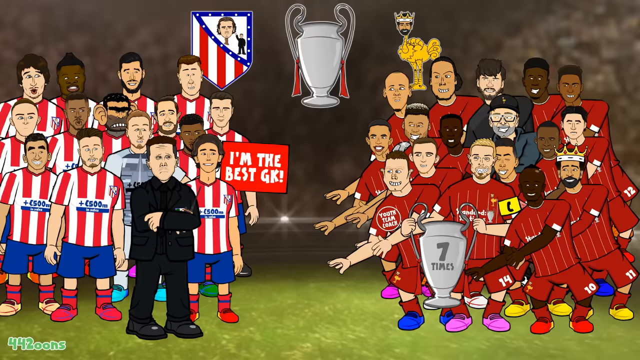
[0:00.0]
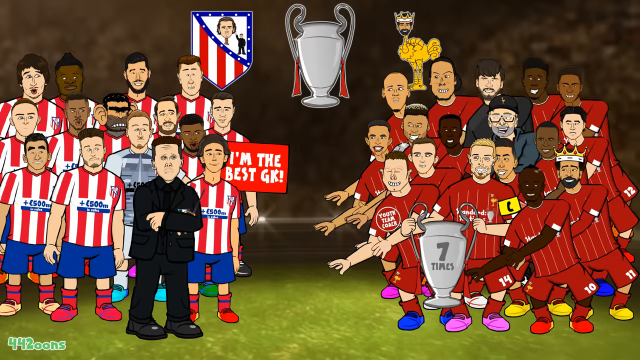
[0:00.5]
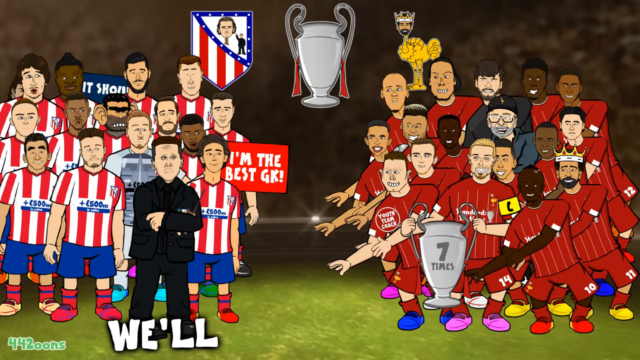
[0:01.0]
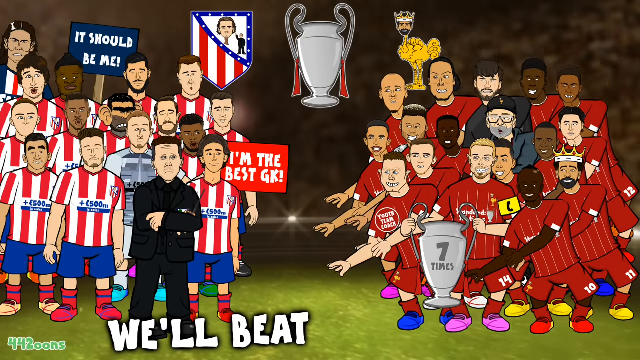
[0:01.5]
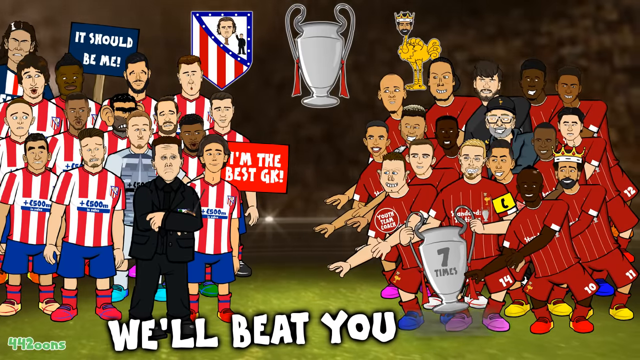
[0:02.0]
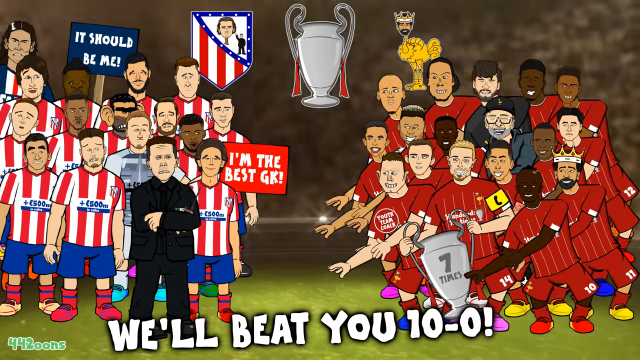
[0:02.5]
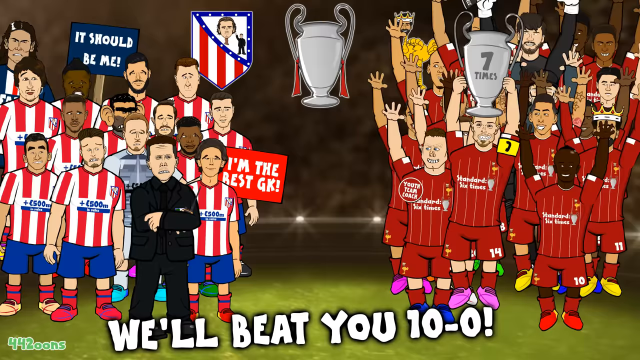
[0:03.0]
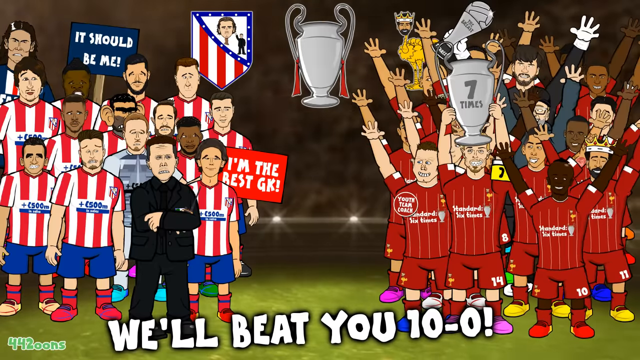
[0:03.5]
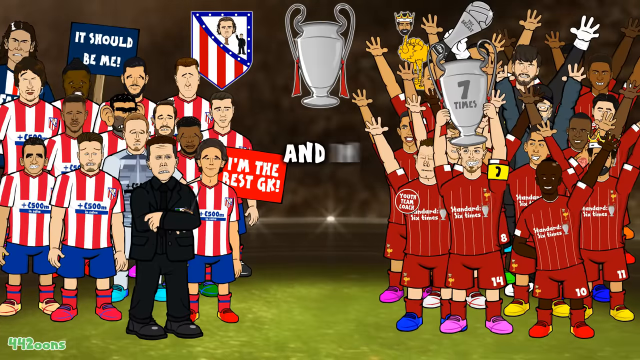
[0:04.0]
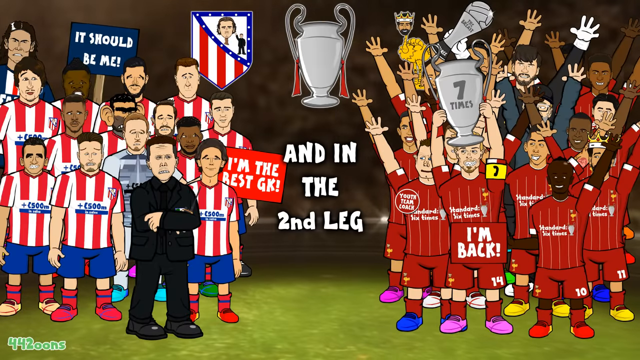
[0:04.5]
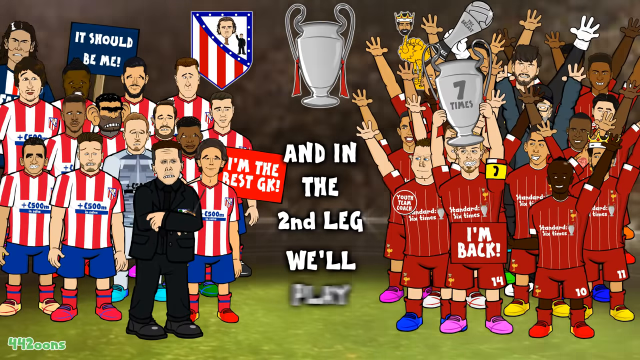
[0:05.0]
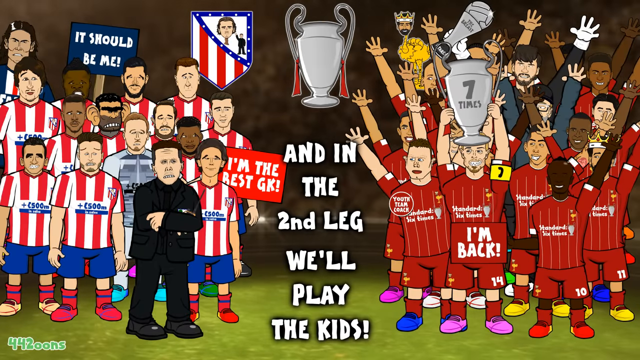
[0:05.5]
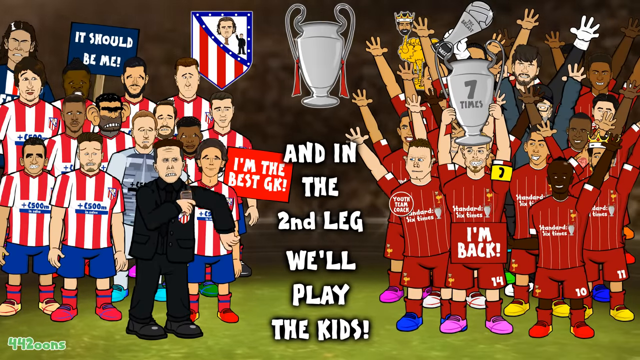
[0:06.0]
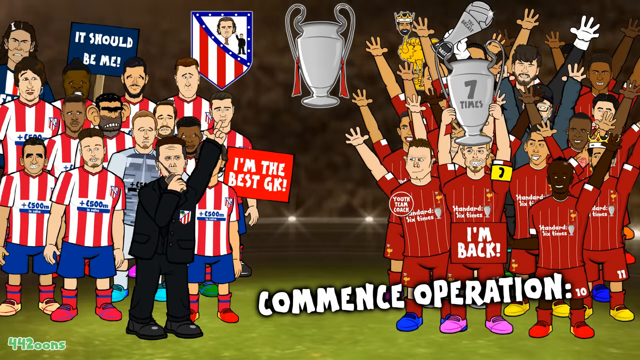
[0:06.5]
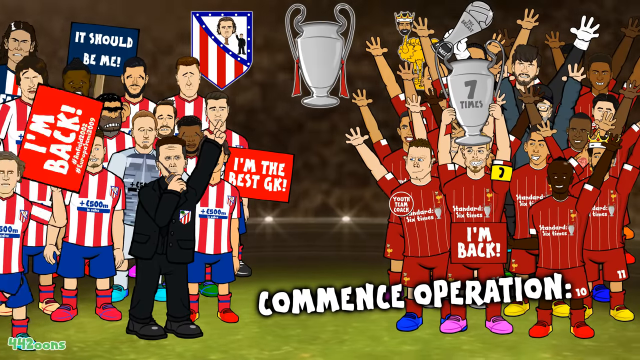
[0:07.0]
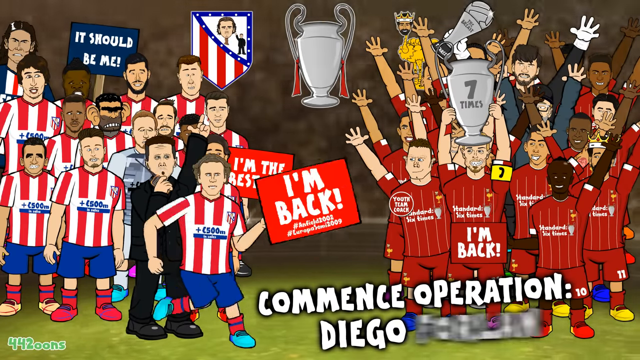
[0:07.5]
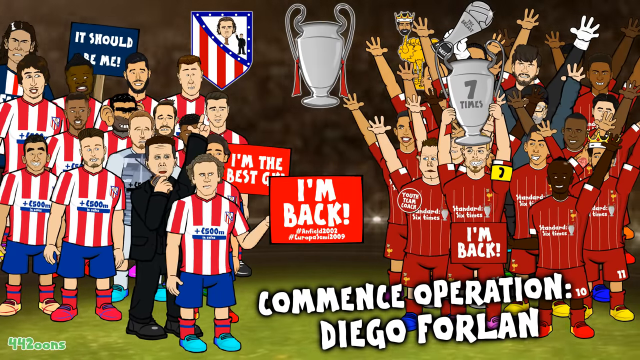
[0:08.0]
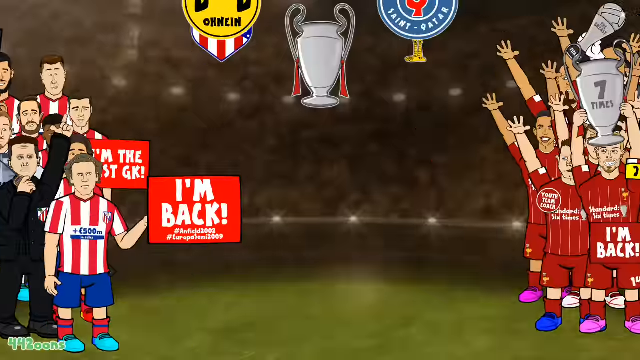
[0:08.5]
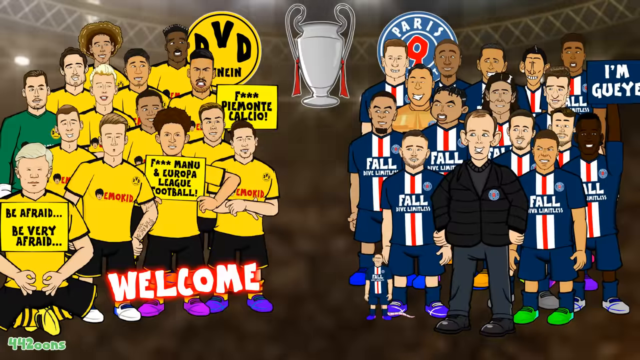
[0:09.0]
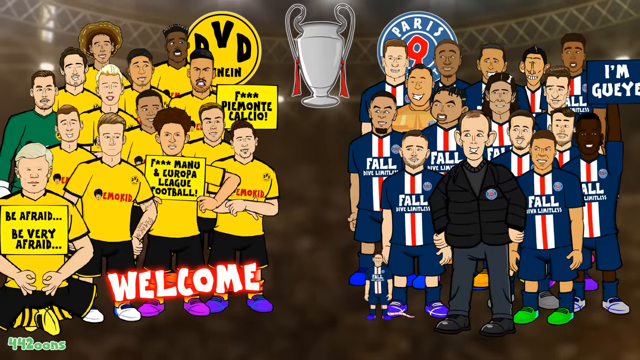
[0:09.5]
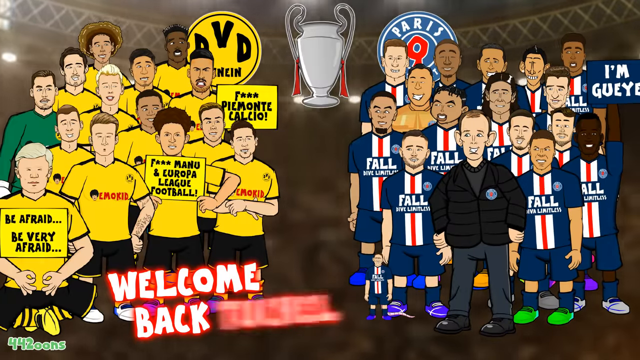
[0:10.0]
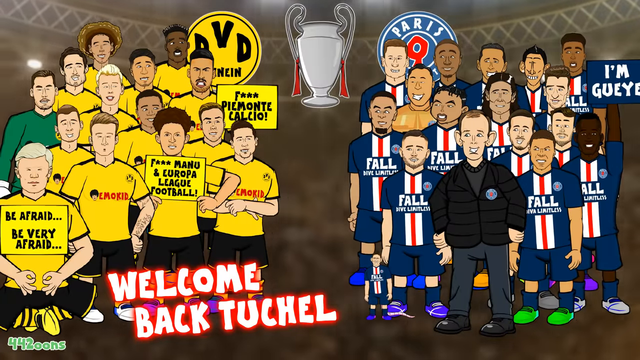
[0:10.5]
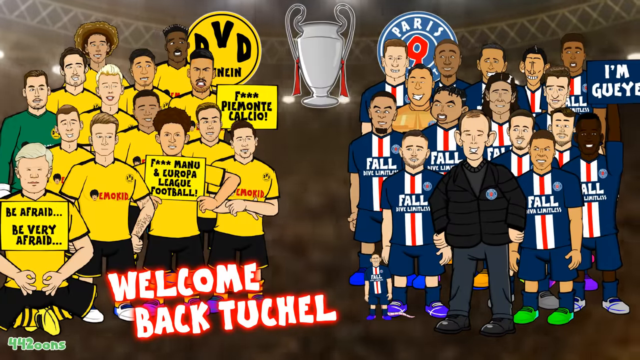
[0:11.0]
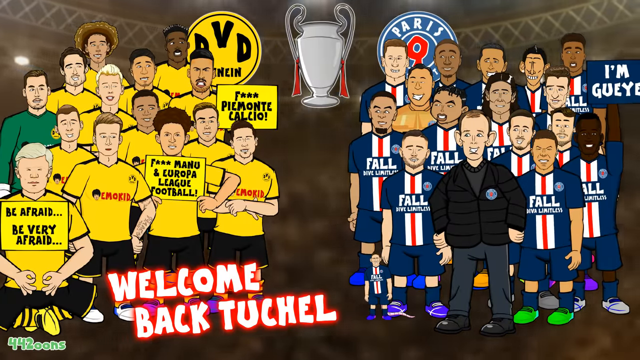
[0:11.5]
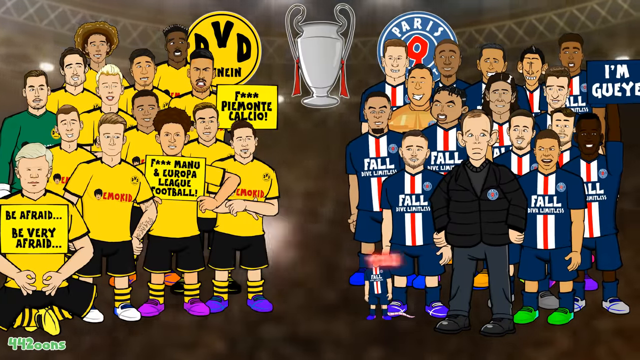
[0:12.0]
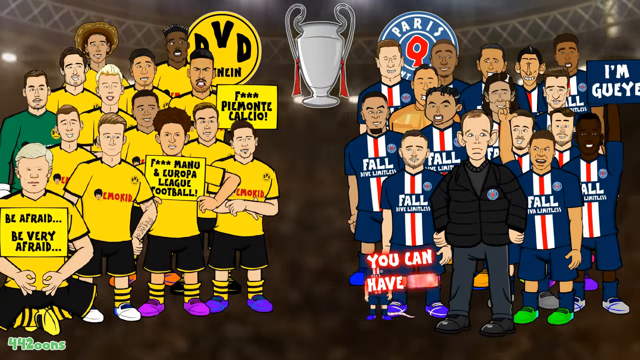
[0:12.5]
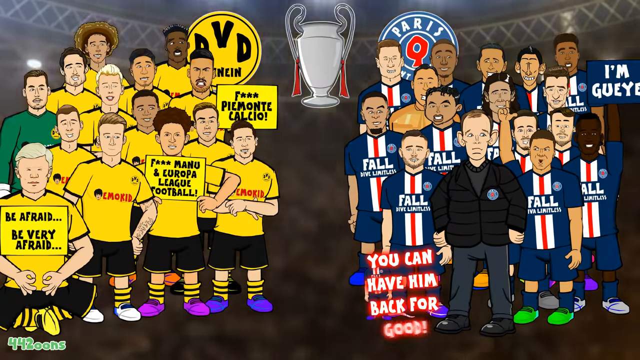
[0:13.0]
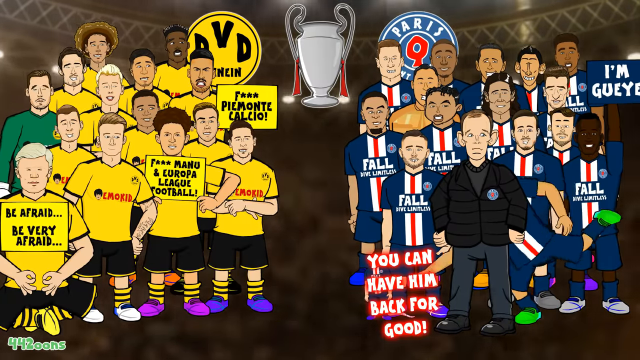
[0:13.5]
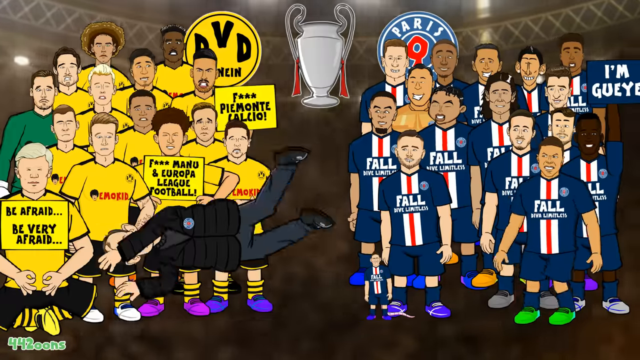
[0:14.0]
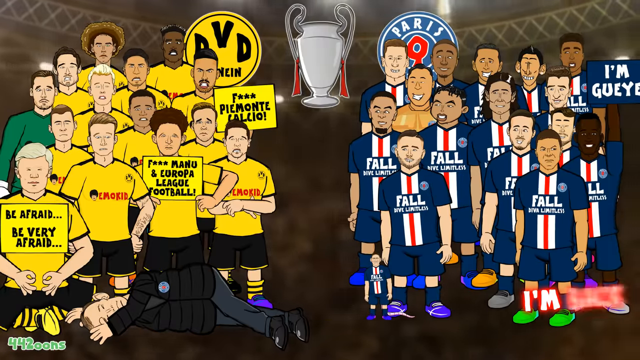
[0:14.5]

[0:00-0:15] The video, called The Last 16 Champions League Song, is an animation showing two teams: one in solid red uniforms on the right side of the screen and one in red and white striped uniforms on the left. The characters are kind of poorly animated, with little movement. White text appears in the middle of the screen reading "And in the second leg we'll play the kids!", followed by "commence operation". One guy runs onto the field holding a sign that says "I'm back. #Anfield 2002, #Europa Semi 2009". The team on the right in solid red jerseys has "standard" written in white on their jerseys. One guy holds up a gray trophy that says "seven times". The animation then moves to two different teams: a yellow kit on the left and a blue kit on the right with a white and a red line down the middle. The players on the left hold different signs; one says "be afraid, be very afraid" and another says "F Man U and Europa League Football". The characters have angry faces. Text appears on the screen that says "welcome back to chill".